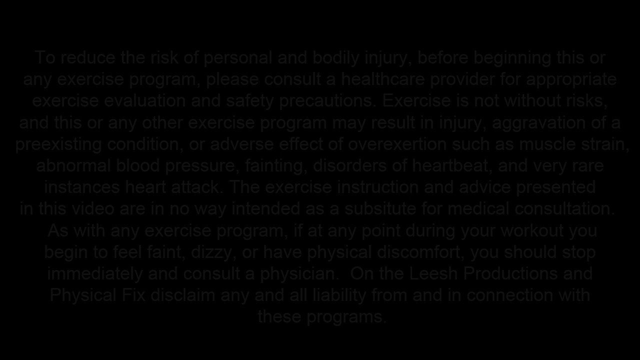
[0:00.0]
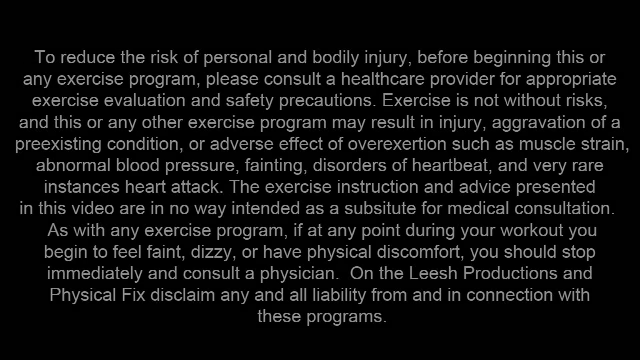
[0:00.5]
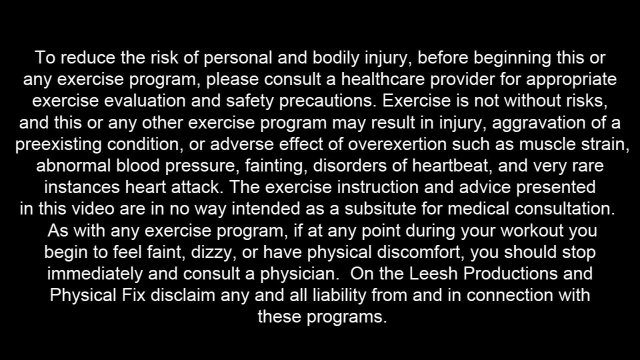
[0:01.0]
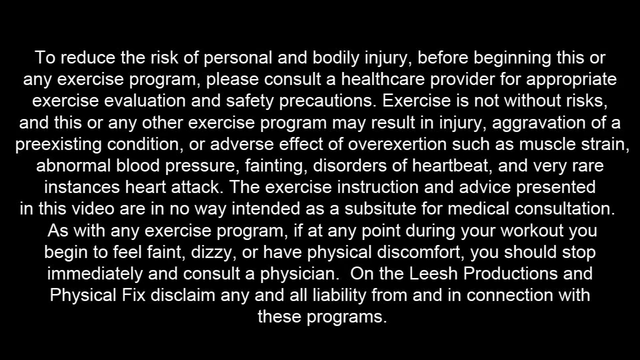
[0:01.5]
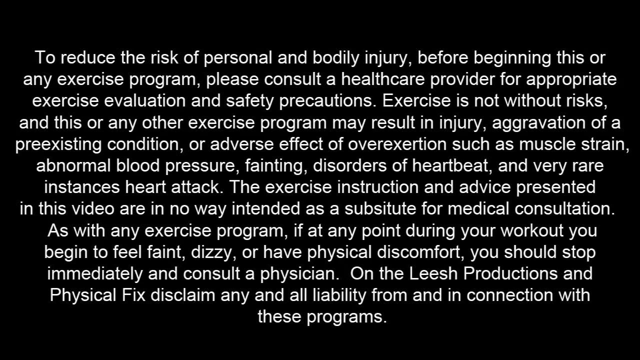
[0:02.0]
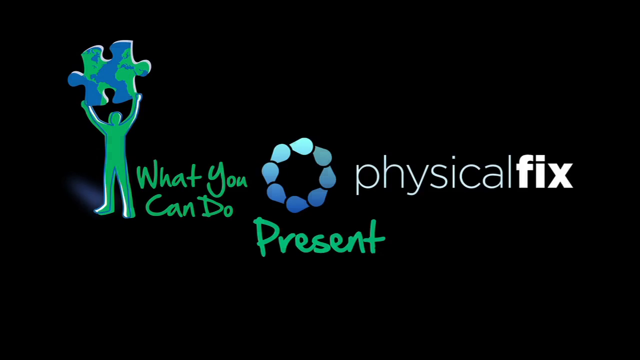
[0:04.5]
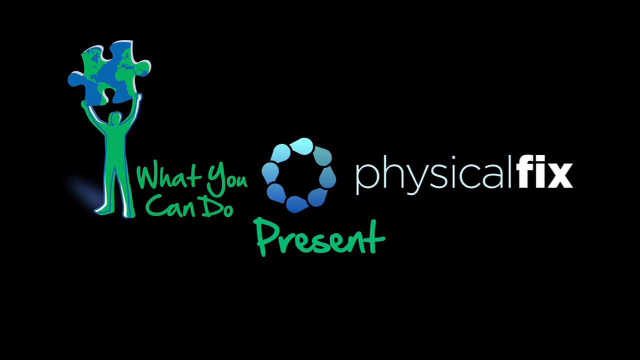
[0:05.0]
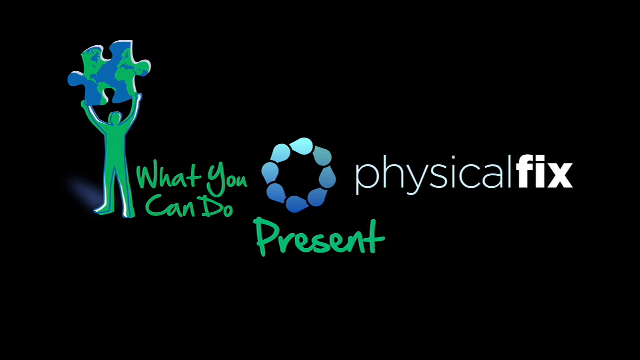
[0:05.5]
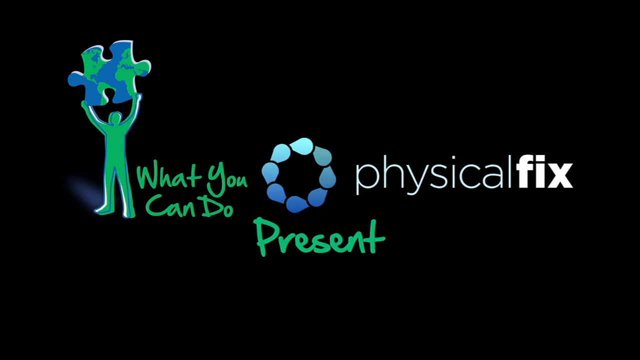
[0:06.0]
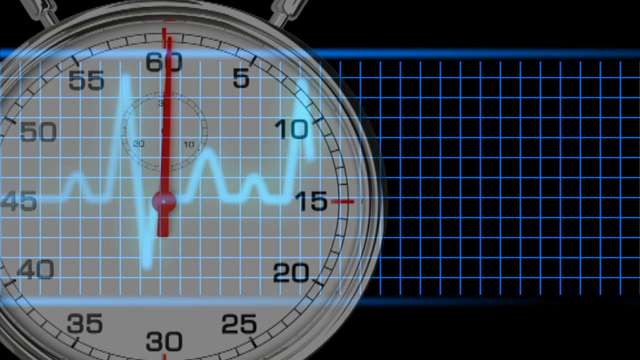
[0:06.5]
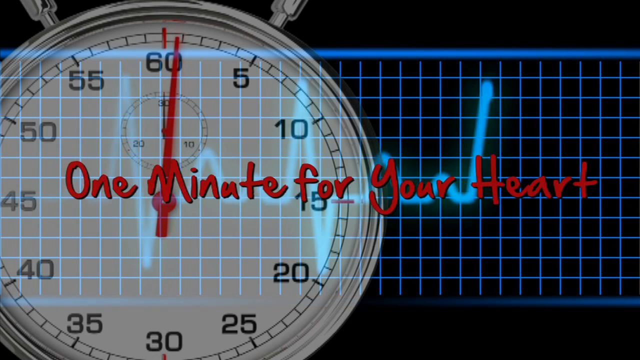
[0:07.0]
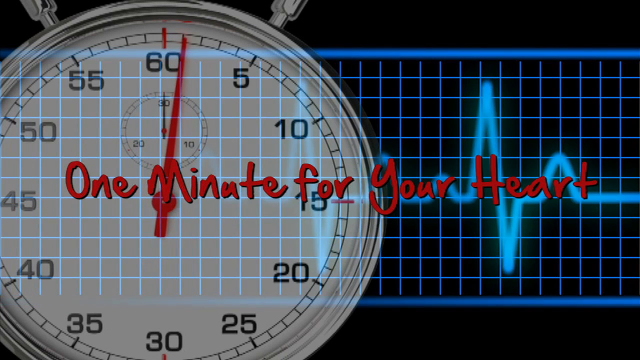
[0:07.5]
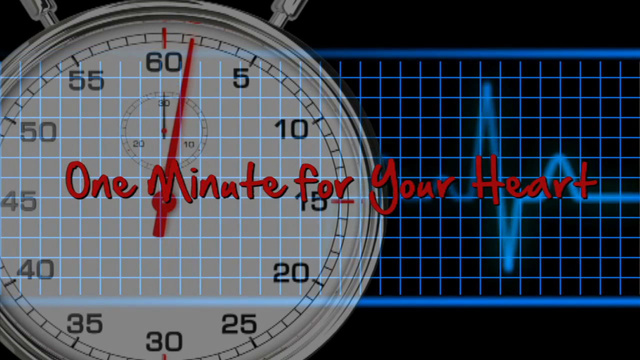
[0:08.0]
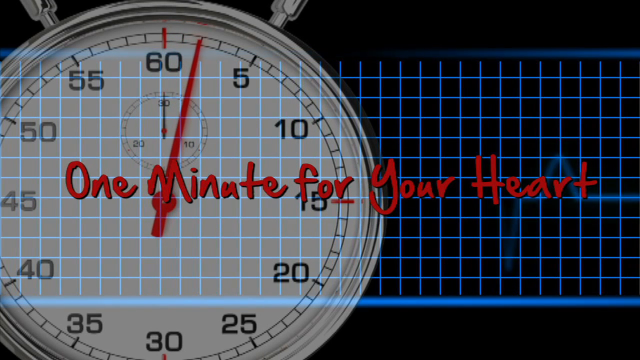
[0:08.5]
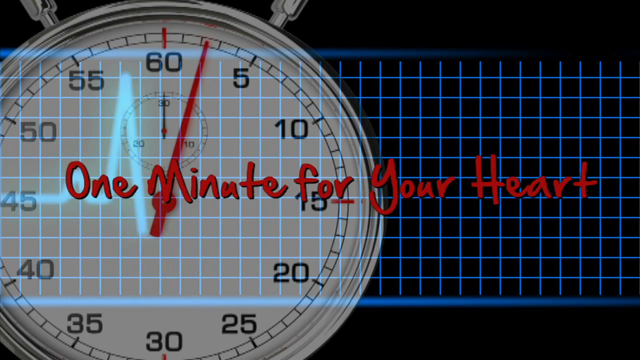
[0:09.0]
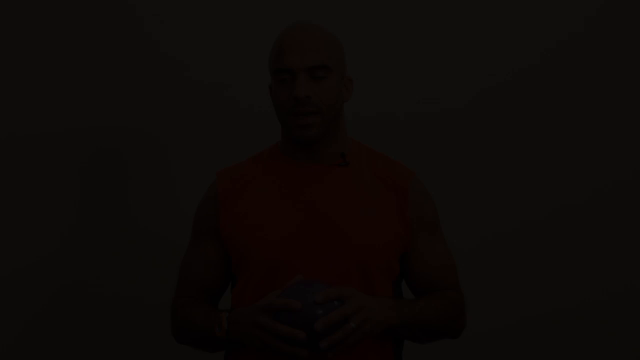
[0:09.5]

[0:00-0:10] The video opens with a disclaimer about exercise safety. It advises reducing the risk of personal and bodily injury before beginning this or any exercise program: "Please consult a healthcare provider for appropriate exercise." It warns that "Exercise is not without risks" and that this or any other exercise program may result in injury, such as aggravation of pre-existing conditions or adverse effects of overexertion like muscle strain, abnormal blood pressure, fainting, heartbeat disorders and, in very rare instances, heart attack.